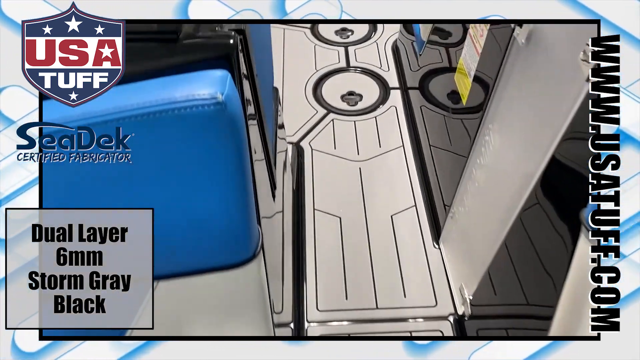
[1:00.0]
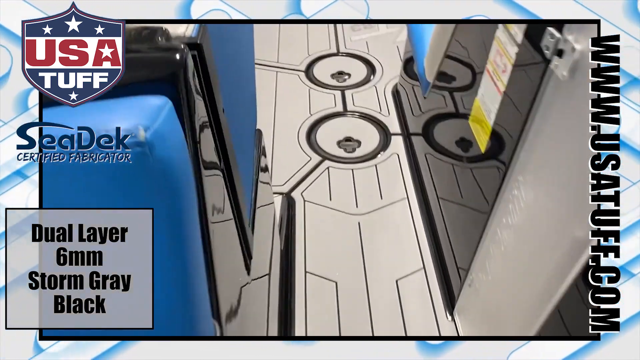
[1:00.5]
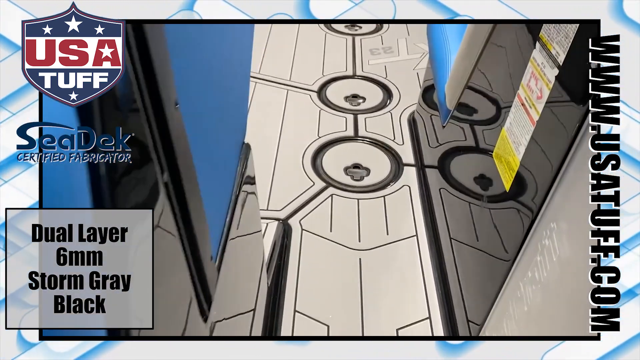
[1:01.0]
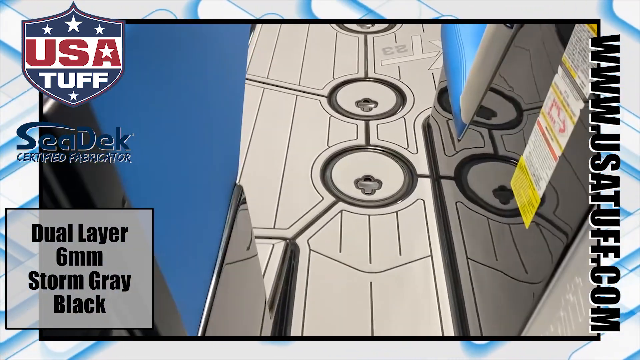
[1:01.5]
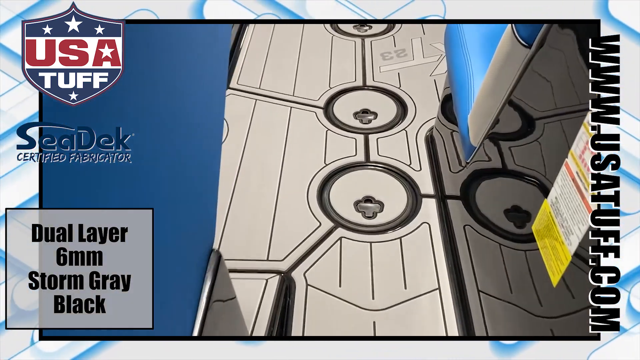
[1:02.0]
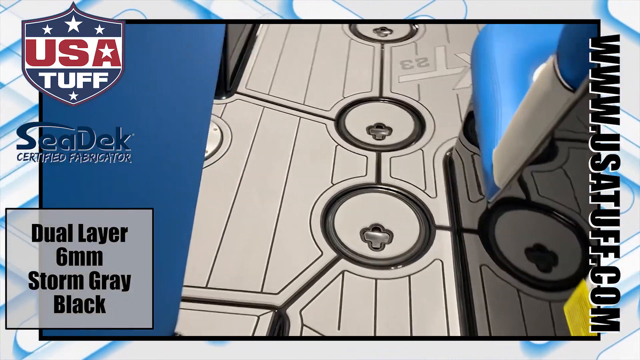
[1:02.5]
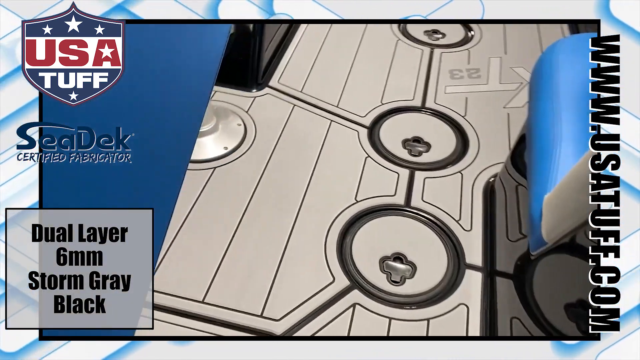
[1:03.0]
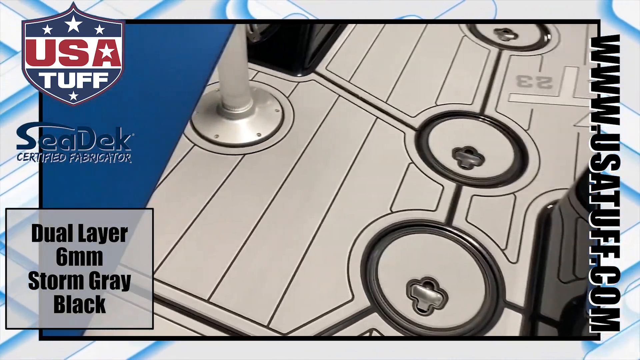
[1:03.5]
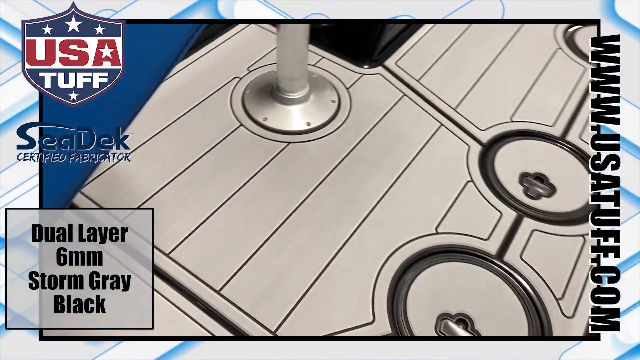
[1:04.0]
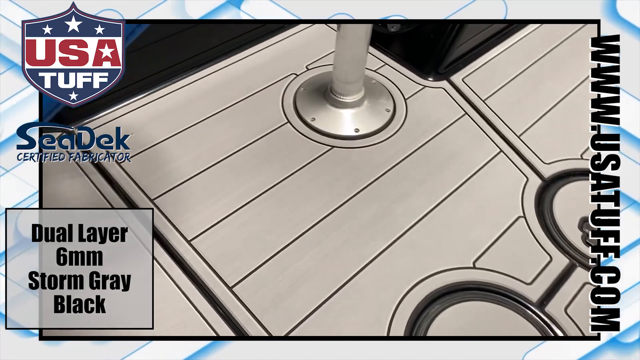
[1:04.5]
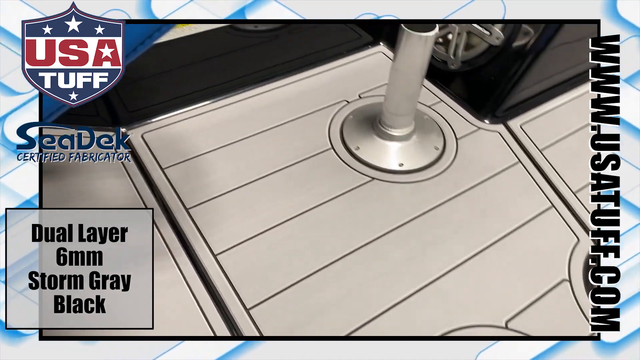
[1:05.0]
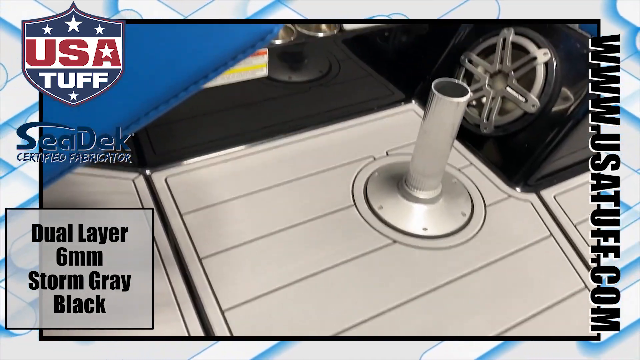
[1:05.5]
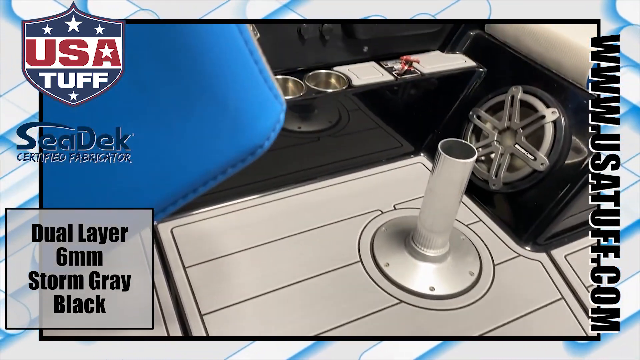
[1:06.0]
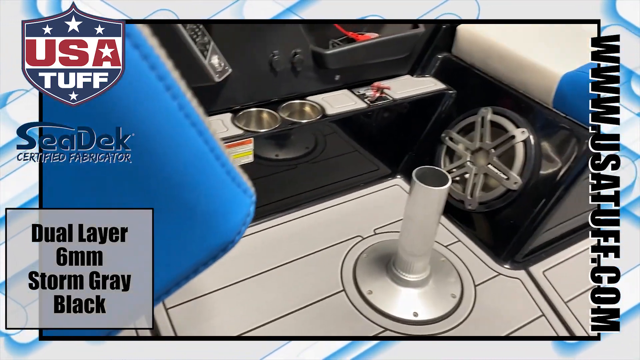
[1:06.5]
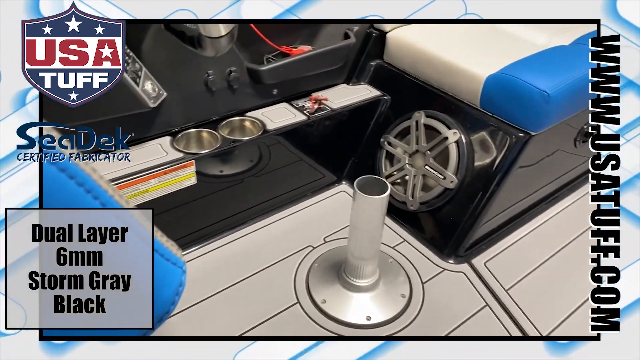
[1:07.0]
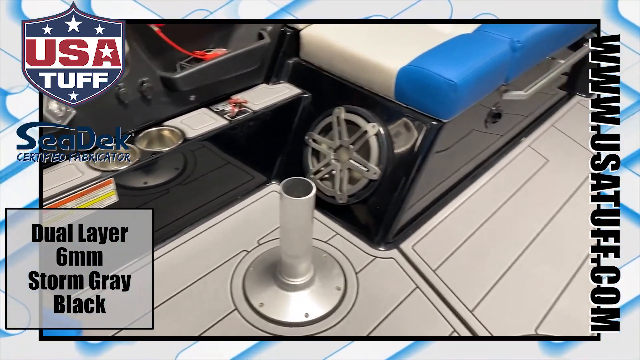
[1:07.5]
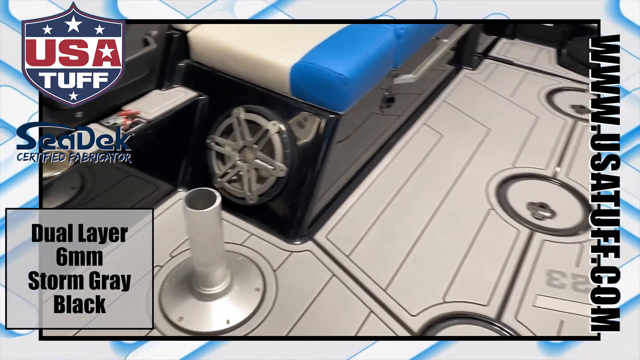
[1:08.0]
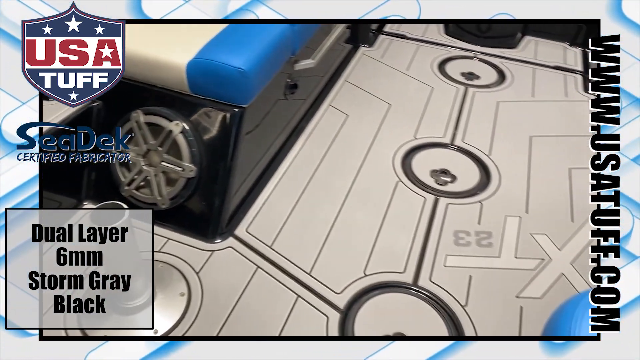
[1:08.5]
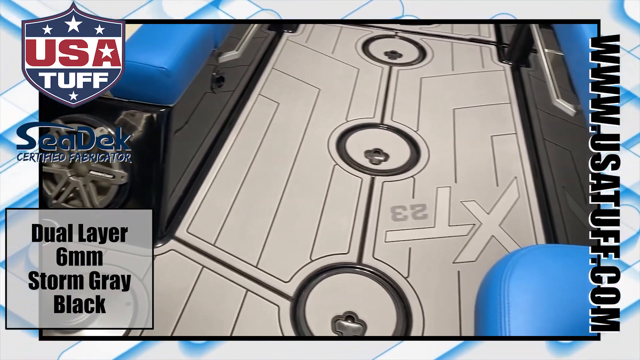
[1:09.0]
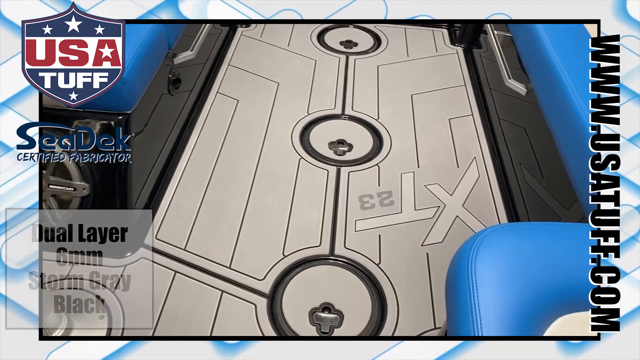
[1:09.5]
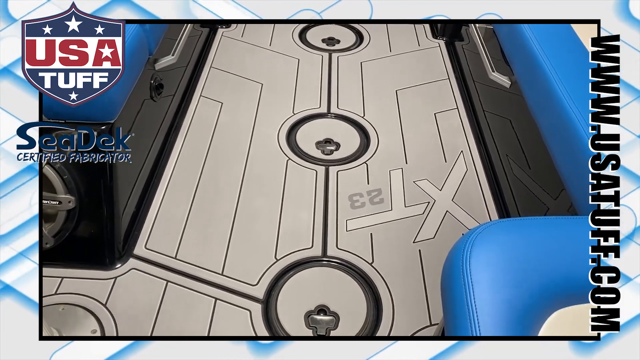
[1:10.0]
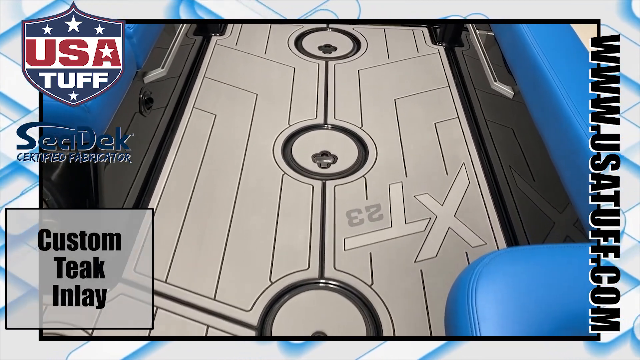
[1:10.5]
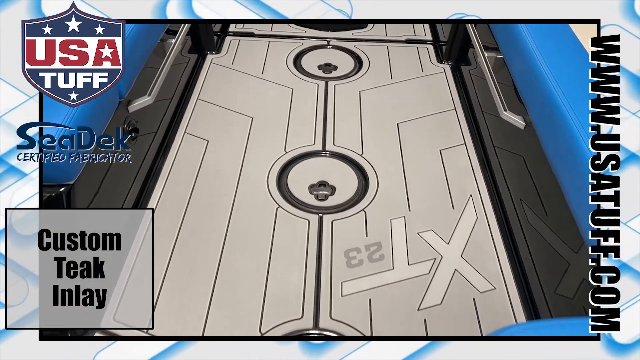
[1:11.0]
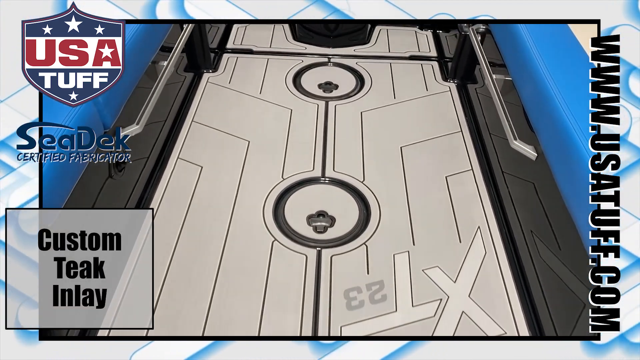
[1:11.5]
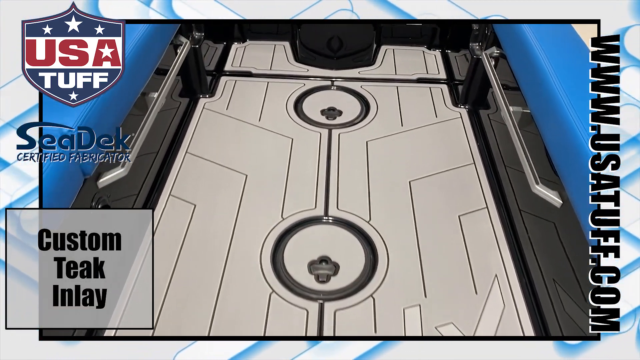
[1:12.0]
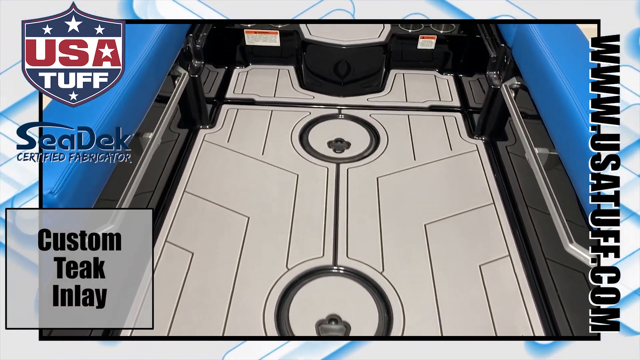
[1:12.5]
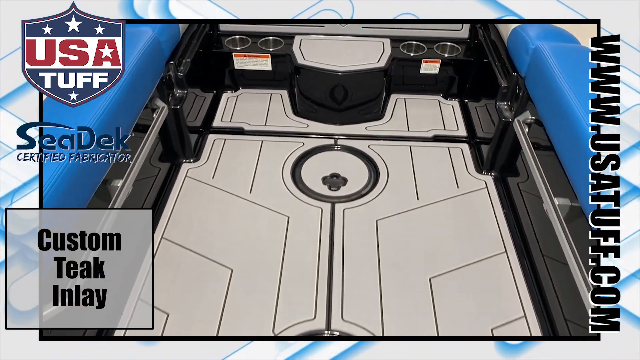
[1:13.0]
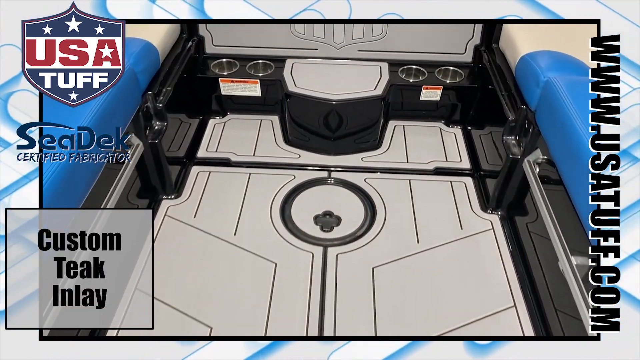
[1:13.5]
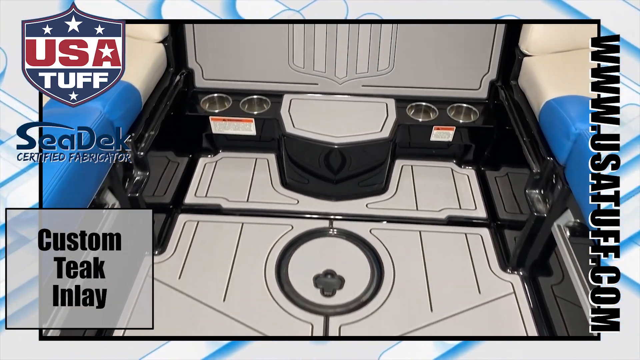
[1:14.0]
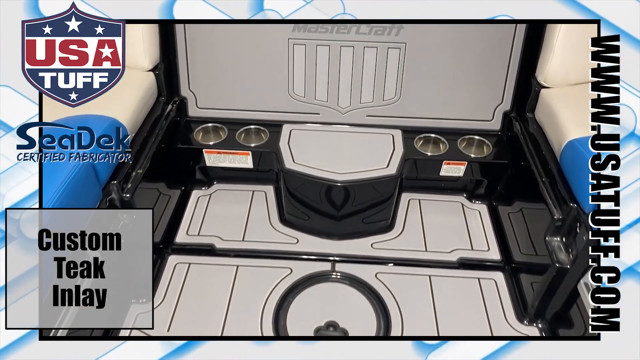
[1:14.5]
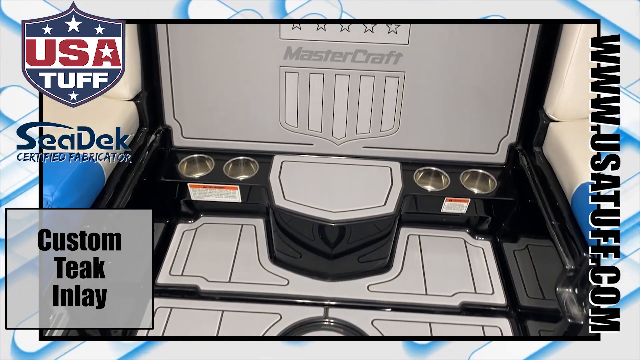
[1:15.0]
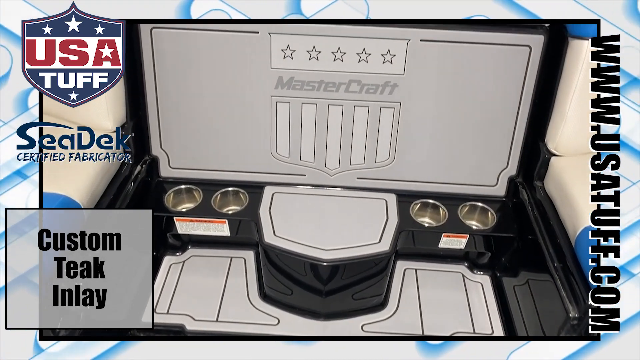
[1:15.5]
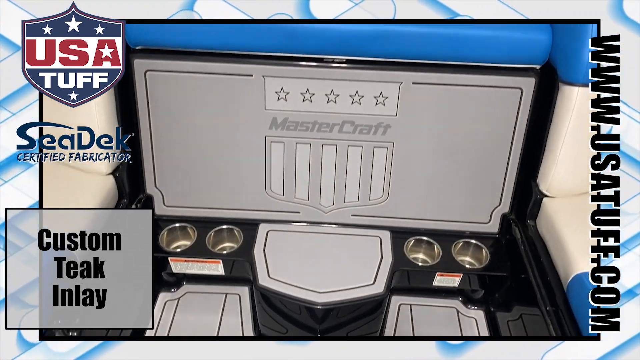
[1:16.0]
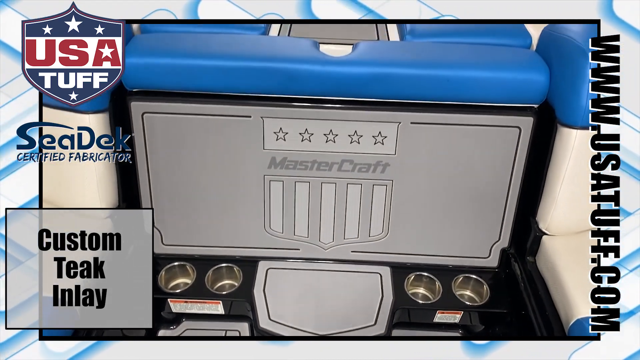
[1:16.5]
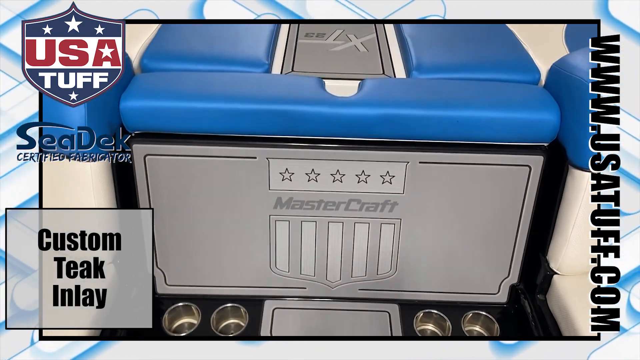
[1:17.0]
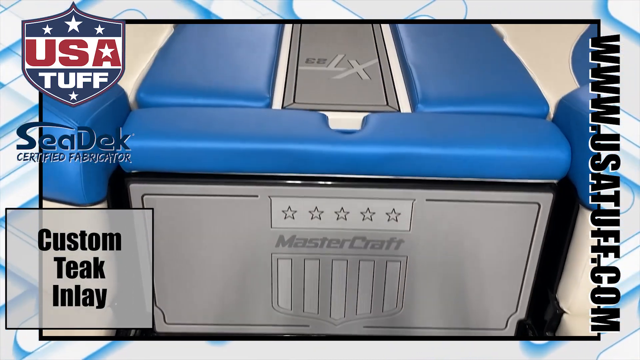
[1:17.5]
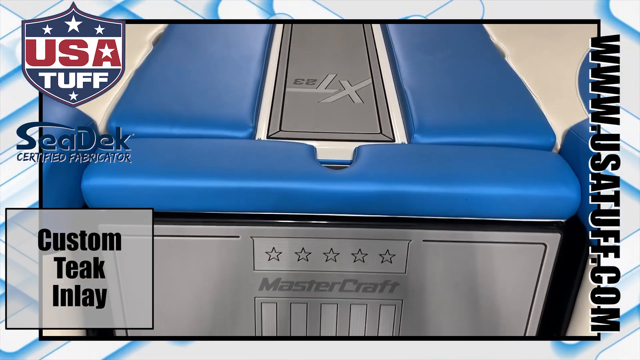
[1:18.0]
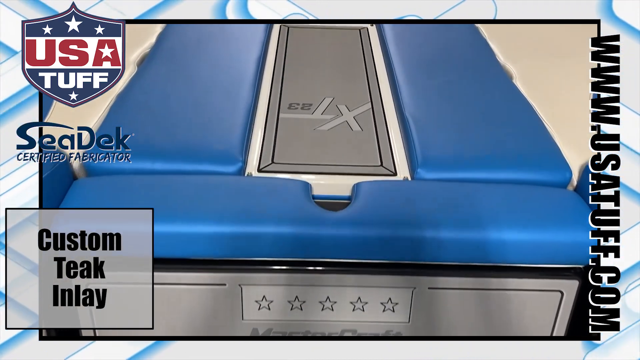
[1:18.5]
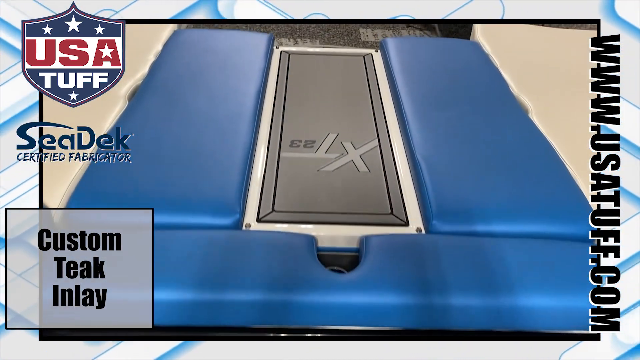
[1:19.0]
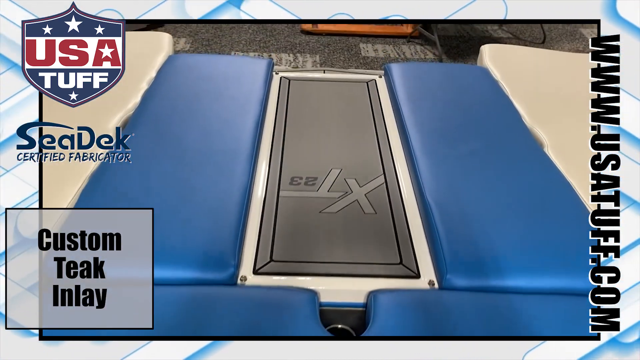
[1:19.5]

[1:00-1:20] In the lower left-hand corner, in bold black font, text reads "dual layer", with "6mm", "storm gray" and "black" on the following lines. The video still shows the boat, apparently after being updated. A walkthrough follows, showing the changes more up close. Text reads "custom teak inlay". In the updated version there are sort of lines in certain sections.